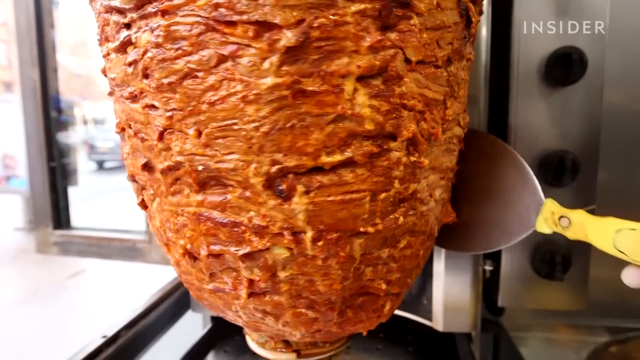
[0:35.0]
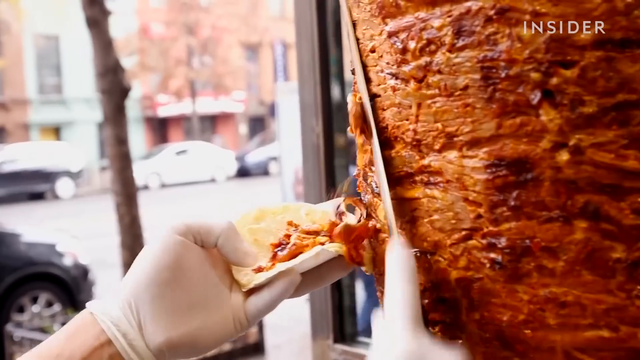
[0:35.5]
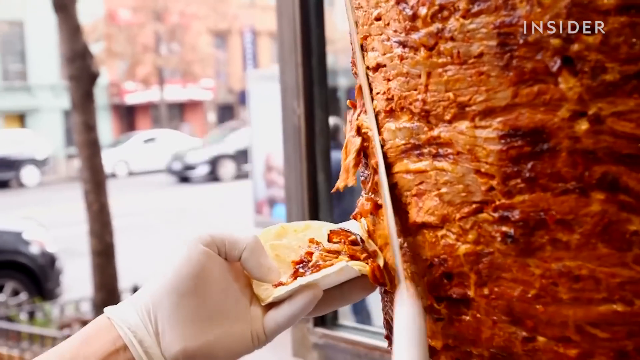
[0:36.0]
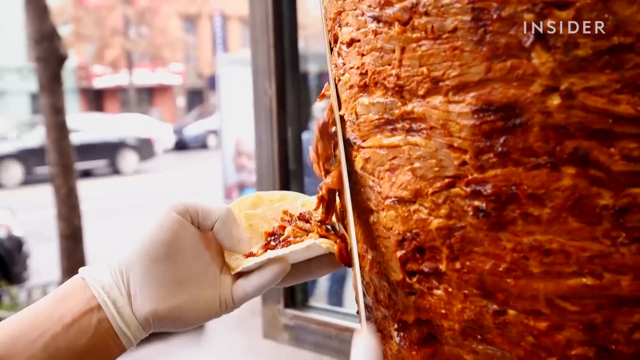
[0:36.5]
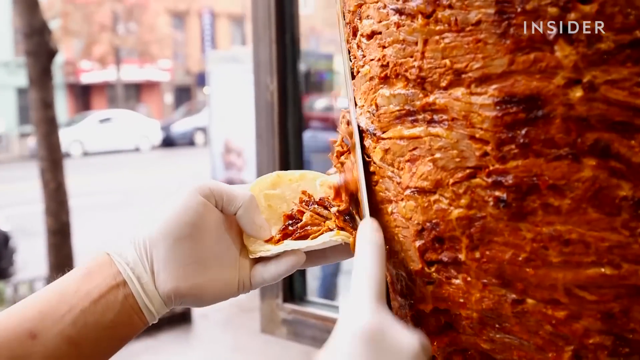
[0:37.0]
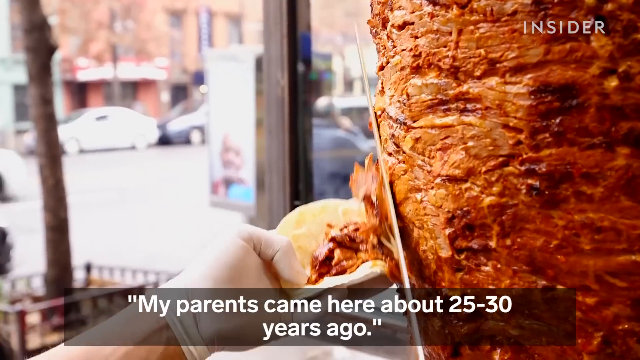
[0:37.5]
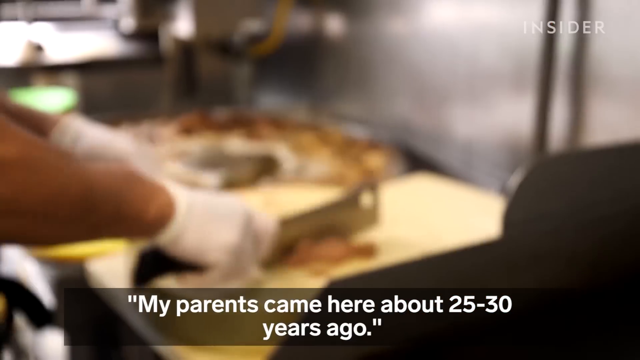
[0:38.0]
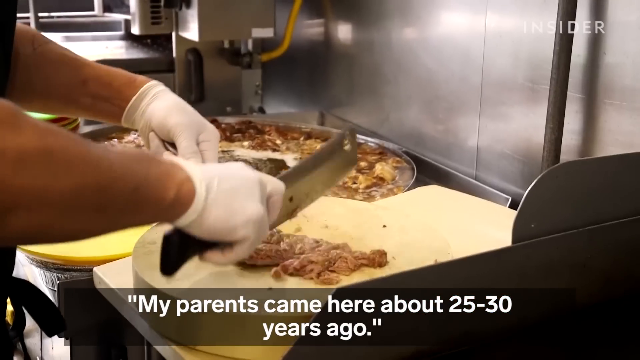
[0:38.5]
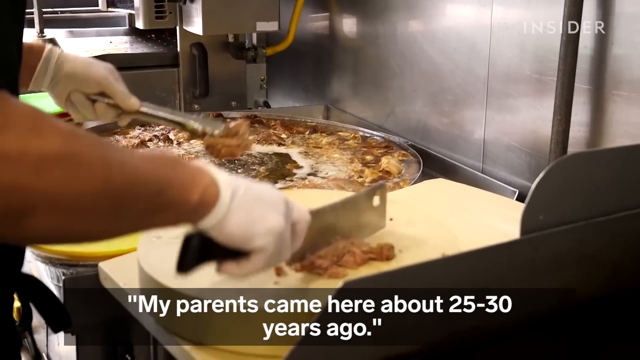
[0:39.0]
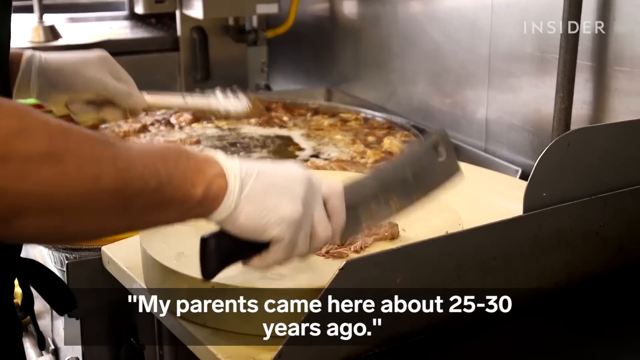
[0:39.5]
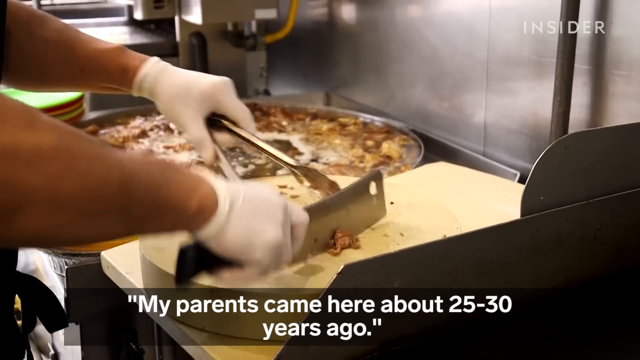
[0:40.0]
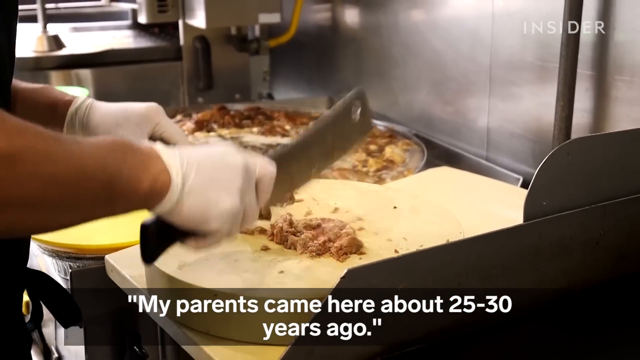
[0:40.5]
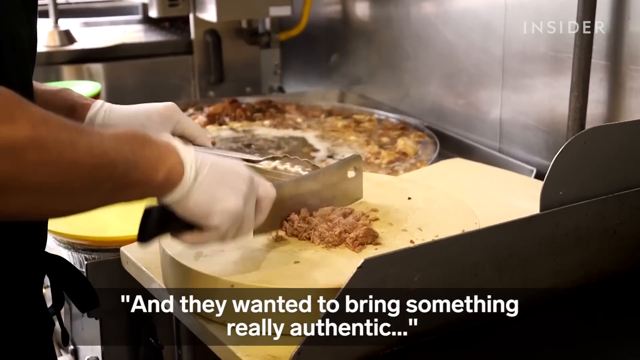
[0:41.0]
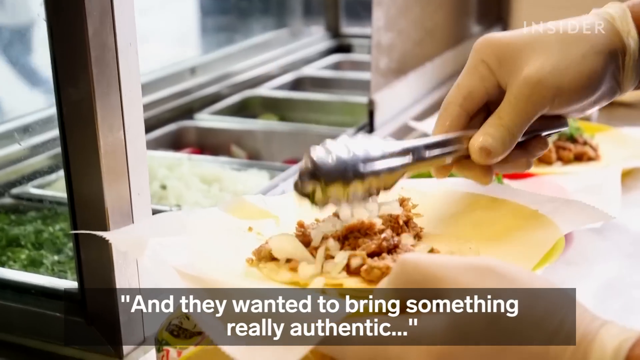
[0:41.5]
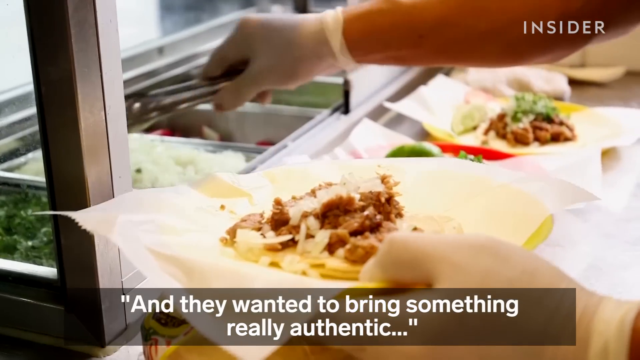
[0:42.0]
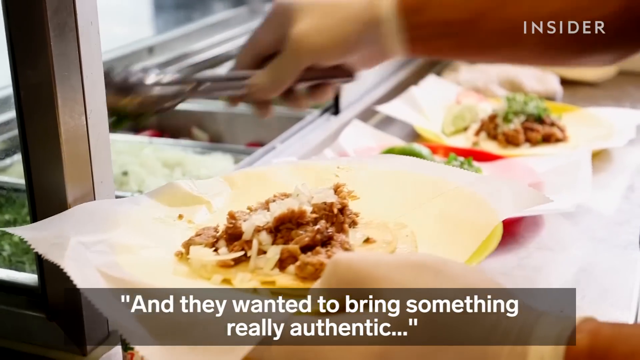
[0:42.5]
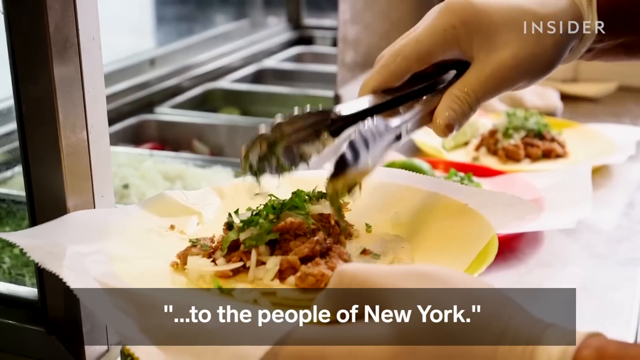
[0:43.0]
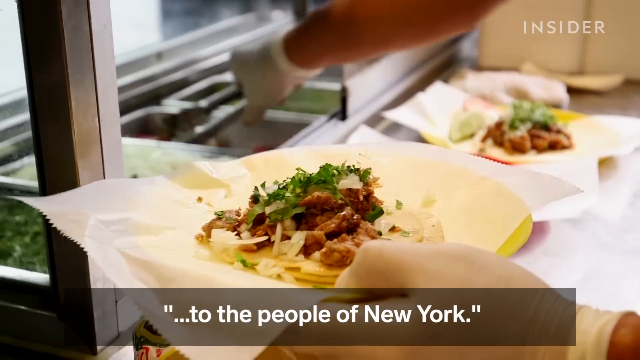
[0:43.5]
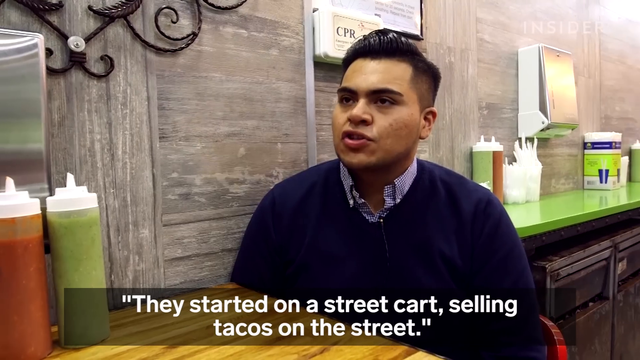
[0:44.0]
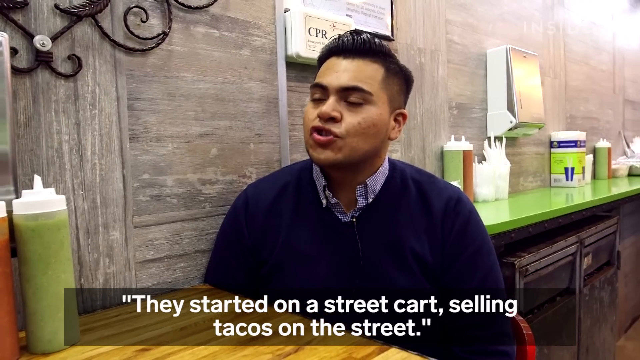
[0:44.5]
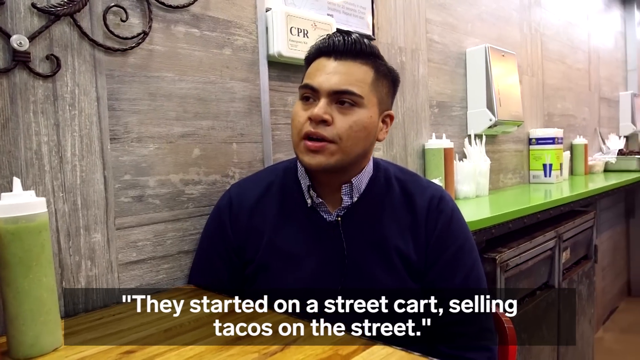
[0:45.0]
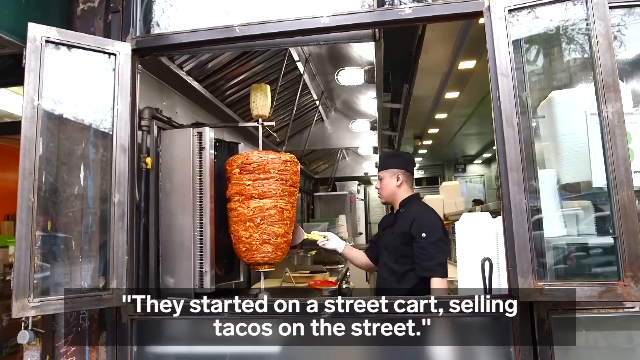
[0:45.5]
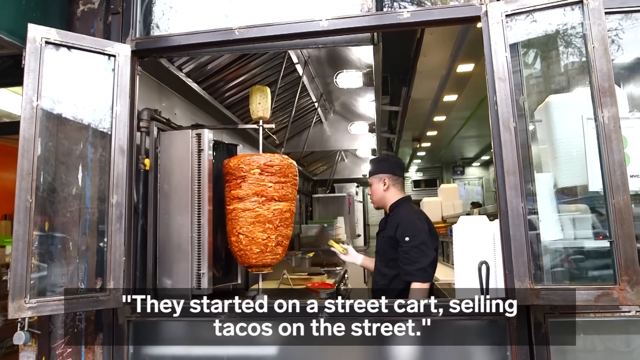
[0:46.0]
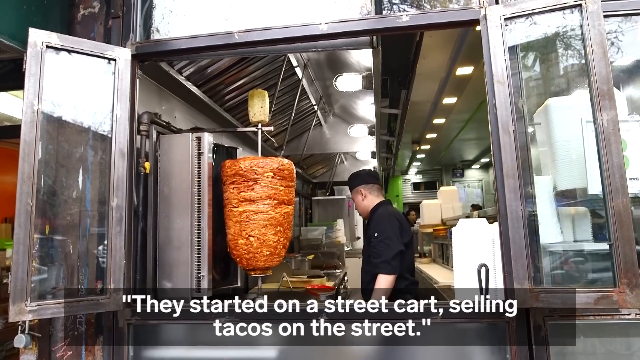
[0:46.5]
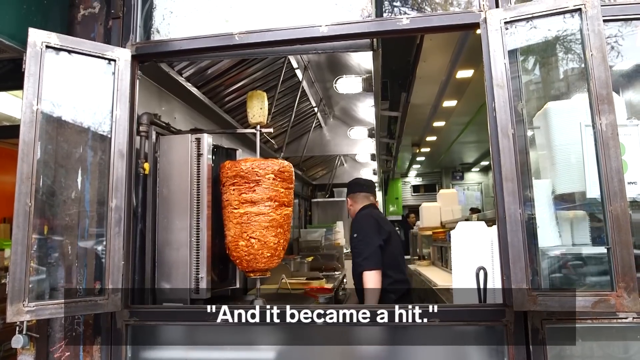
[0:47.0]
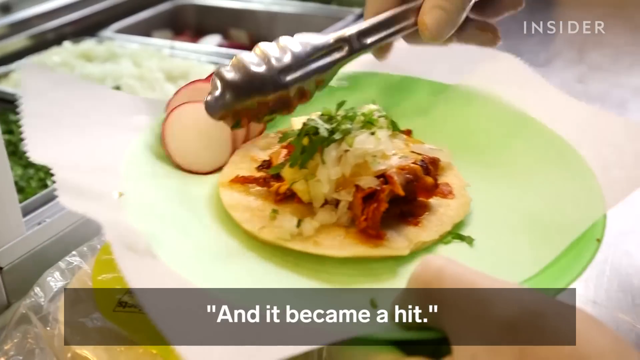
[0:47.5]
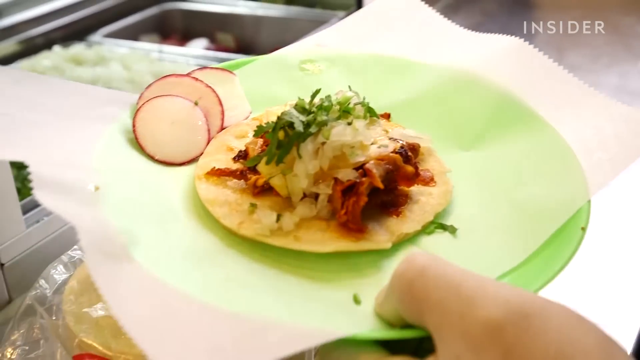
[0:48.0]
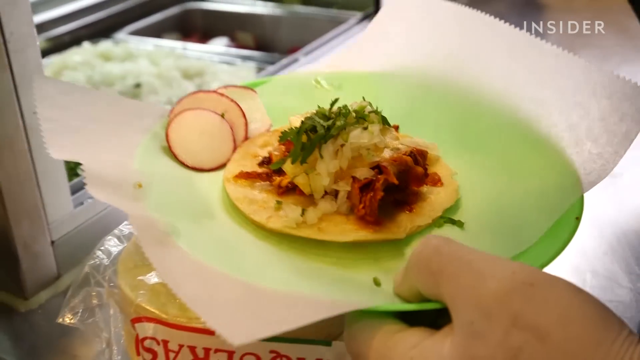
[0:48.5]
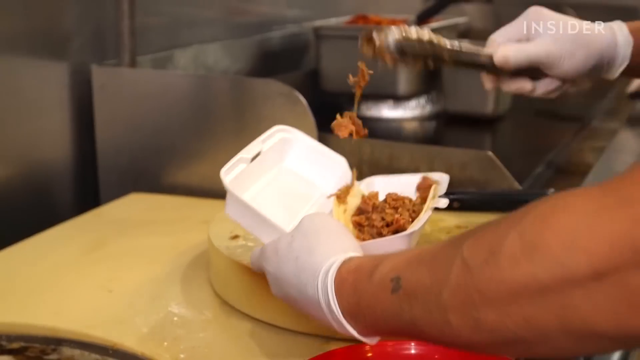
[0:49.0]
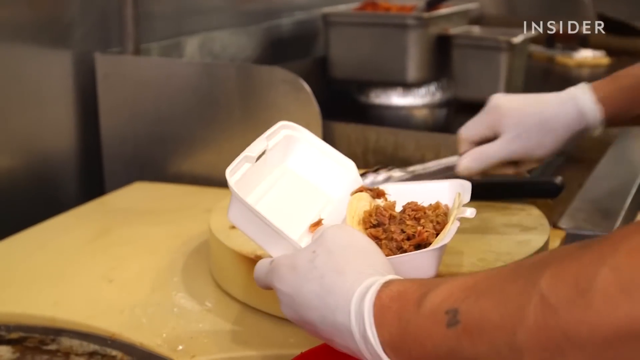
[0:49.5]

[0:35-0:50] Many of the same shots appear: the slow-roasted pork hanging in front of the window and the flat tool that kind of shreds the meat onto the tortilla, handled with white gloves. Someone chops meat on the side with white gloves, and more ingredients are added from the stainless steel containers again. The owner is glimpsed again, talking, and the worker chopping the meat is seen from a far-off view, as if looking at him from the window. The inside of the restaurant is shown again. A close-up shows a plate and a takeout container filled with tacos. The Insider logo appears in the top right corner of the video and in a box in the bottom right corner. On a green plate, thin little slices of radish or something similar are added on the side of the taco, along with some onions and maybe some cilantro. From the outside, stainless steel windows are kind of opened to the big hunk of pork.